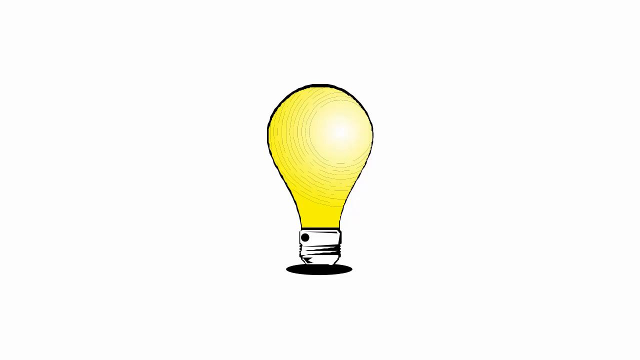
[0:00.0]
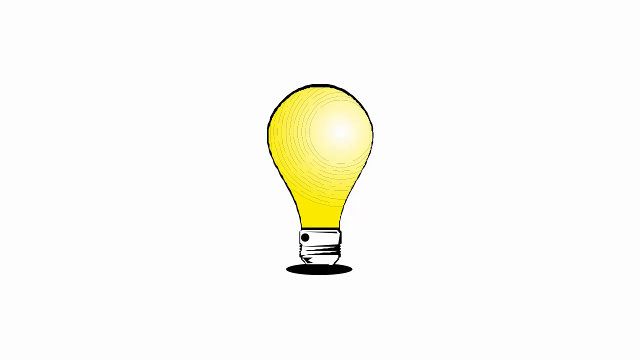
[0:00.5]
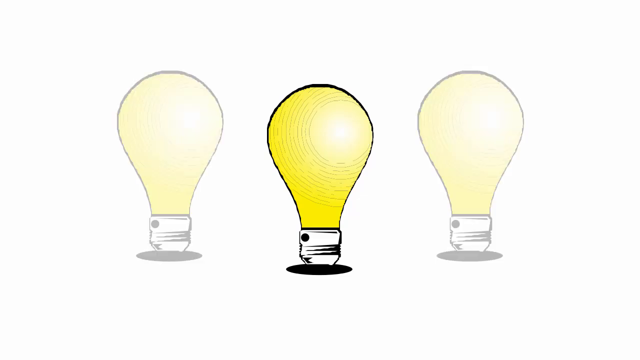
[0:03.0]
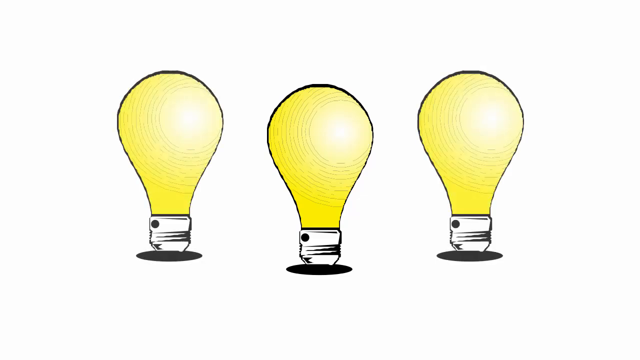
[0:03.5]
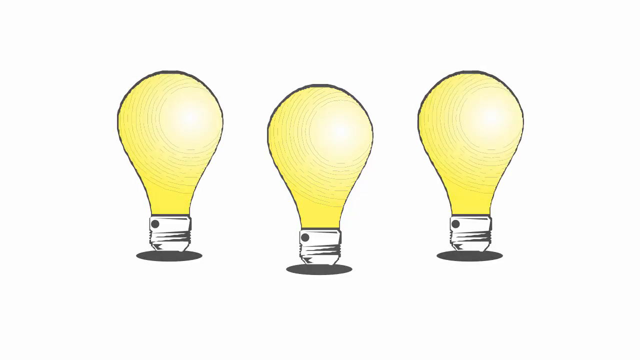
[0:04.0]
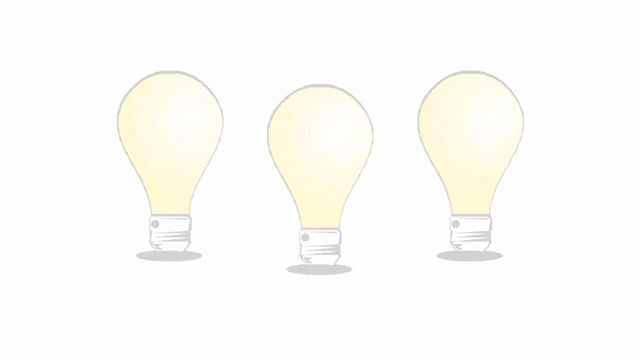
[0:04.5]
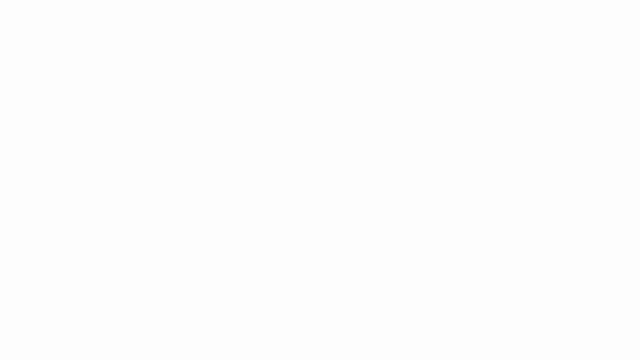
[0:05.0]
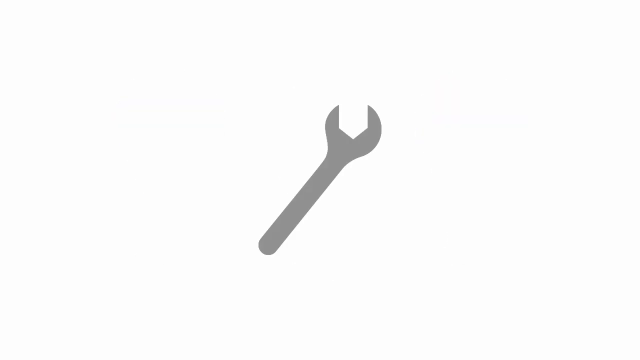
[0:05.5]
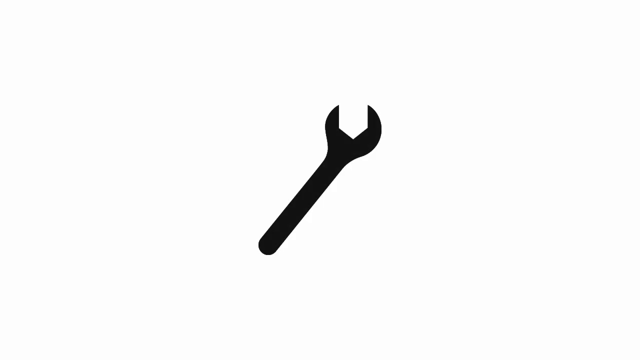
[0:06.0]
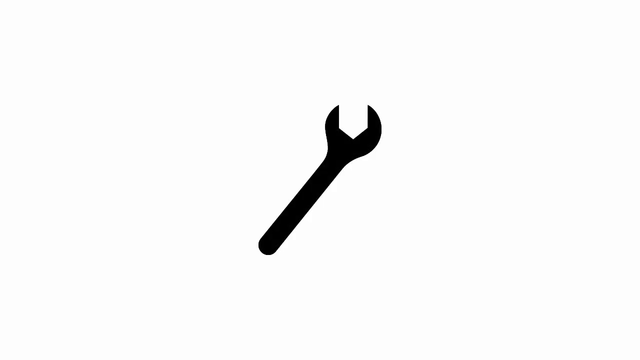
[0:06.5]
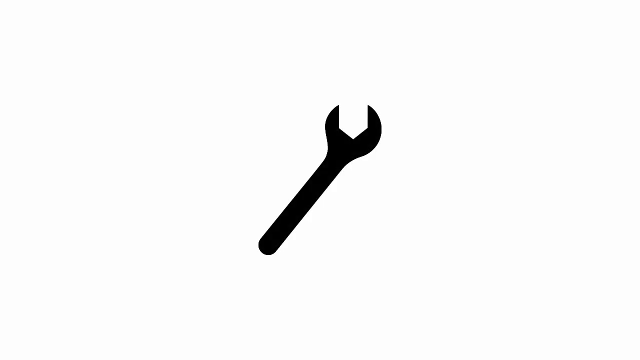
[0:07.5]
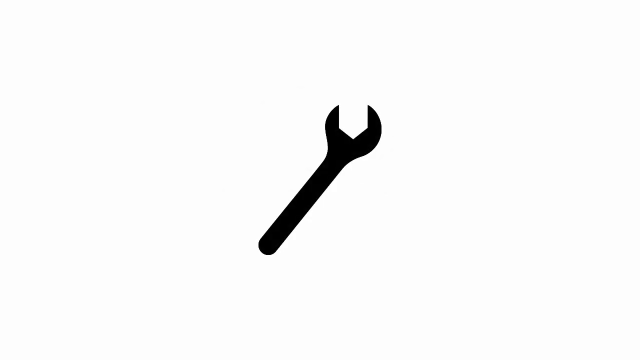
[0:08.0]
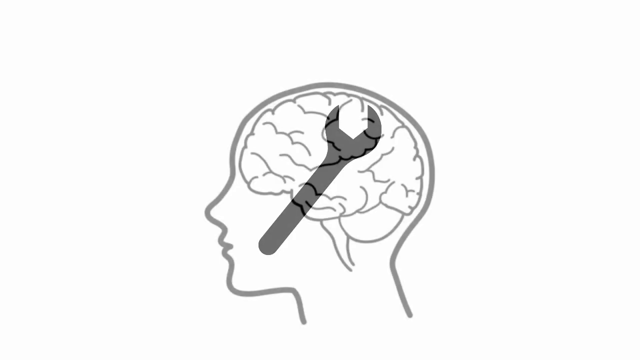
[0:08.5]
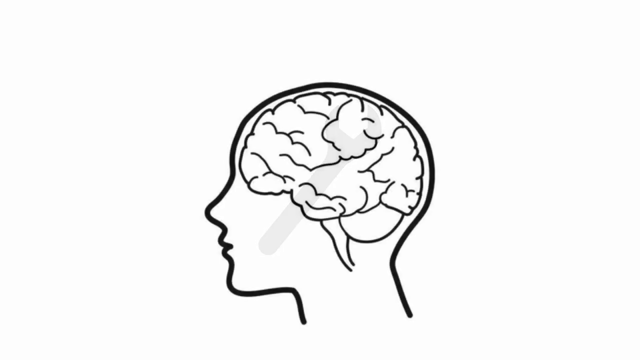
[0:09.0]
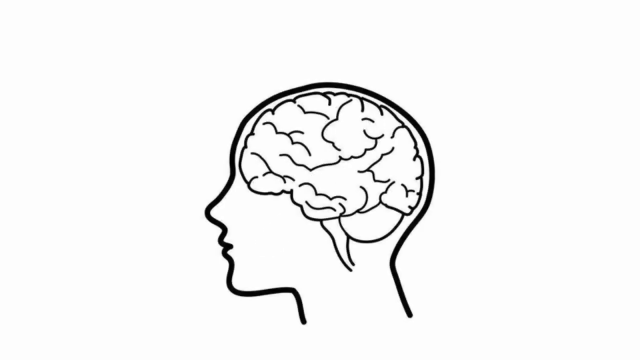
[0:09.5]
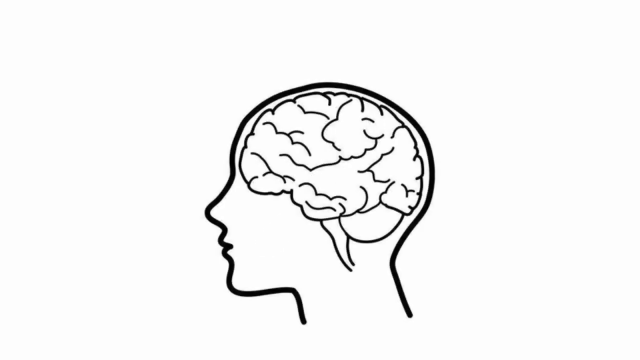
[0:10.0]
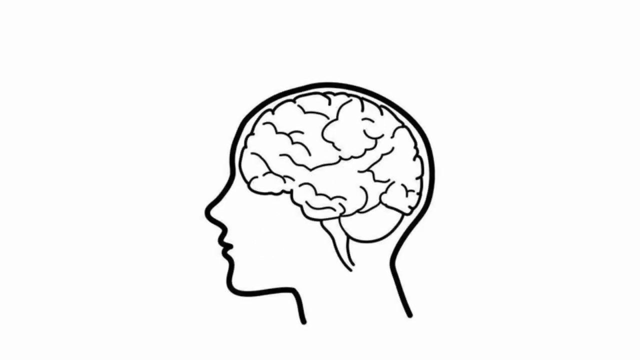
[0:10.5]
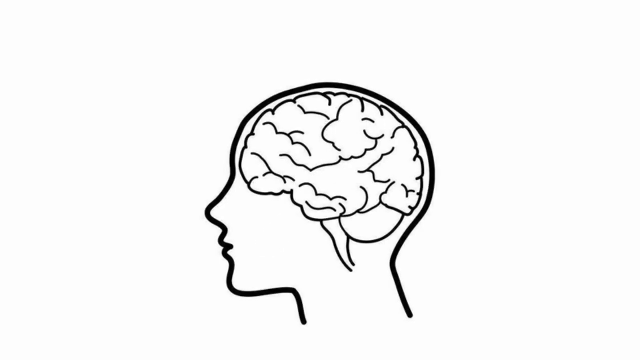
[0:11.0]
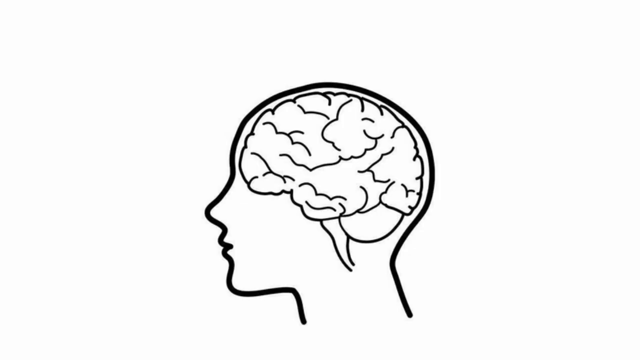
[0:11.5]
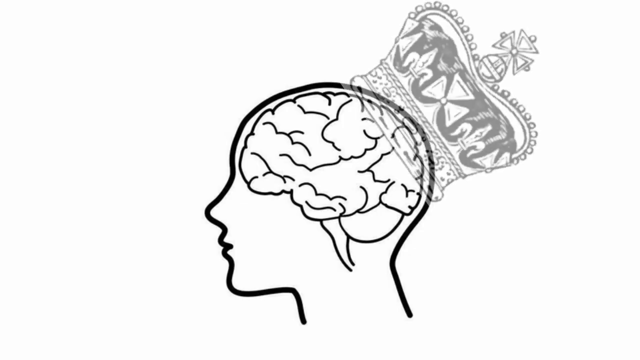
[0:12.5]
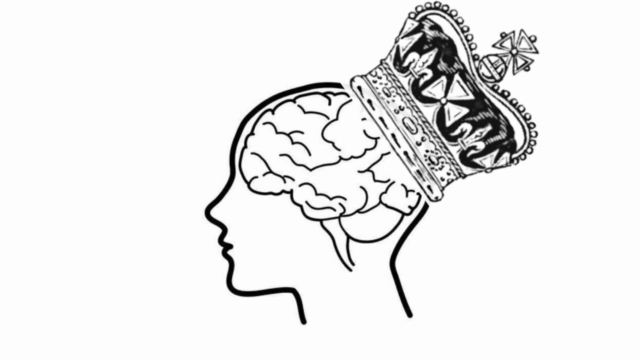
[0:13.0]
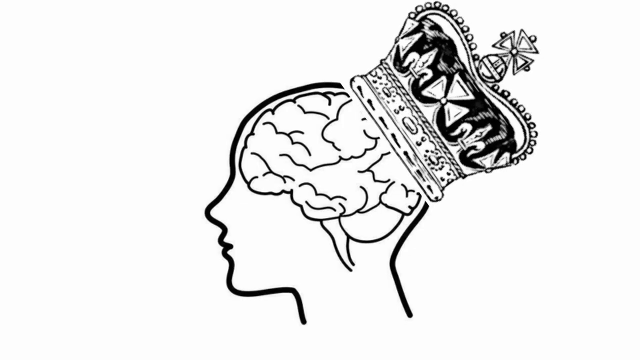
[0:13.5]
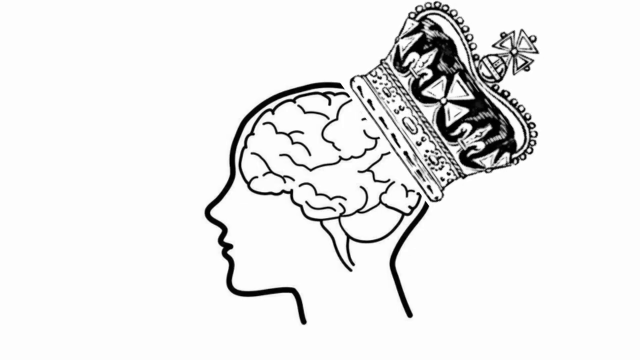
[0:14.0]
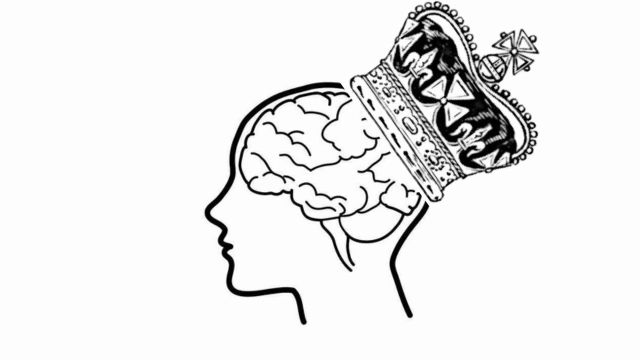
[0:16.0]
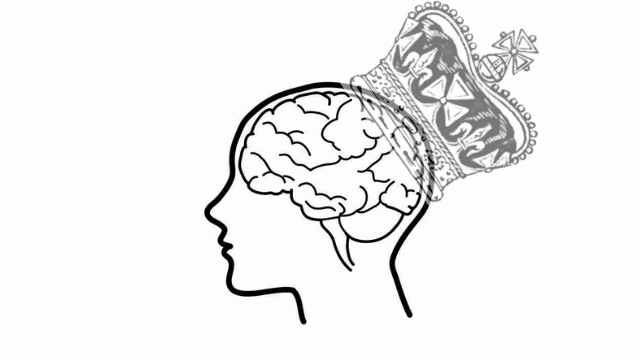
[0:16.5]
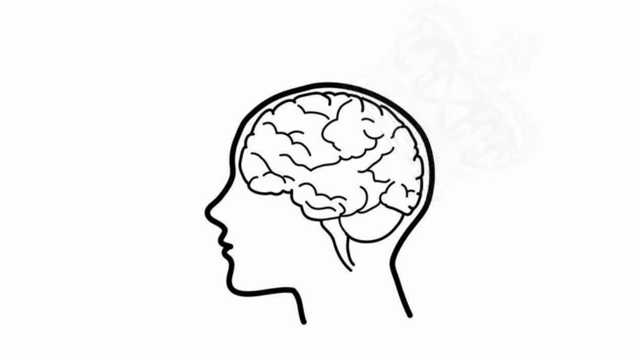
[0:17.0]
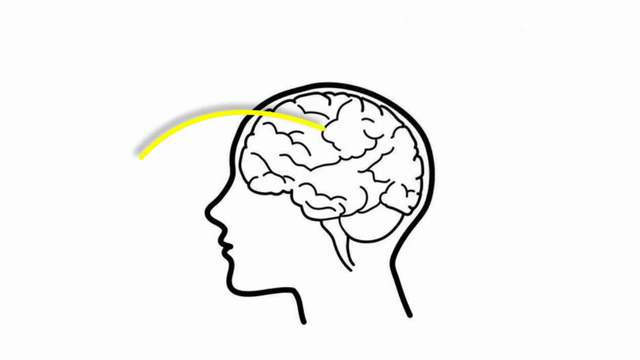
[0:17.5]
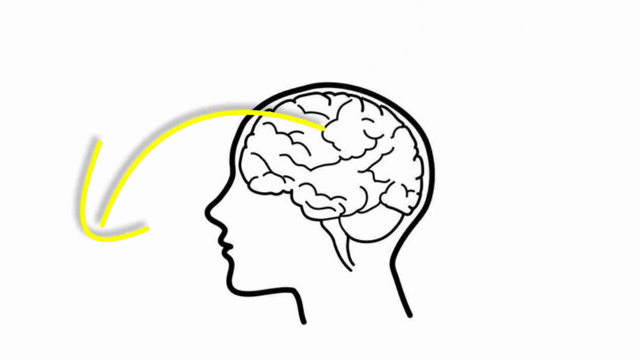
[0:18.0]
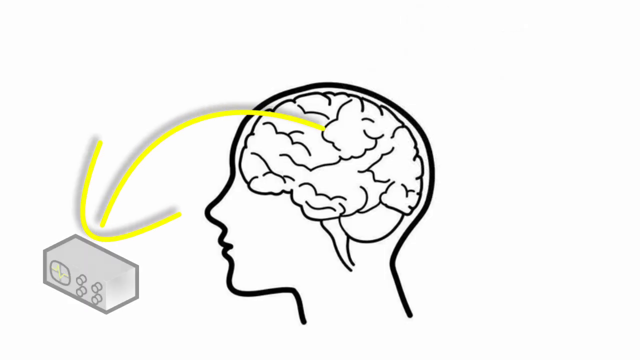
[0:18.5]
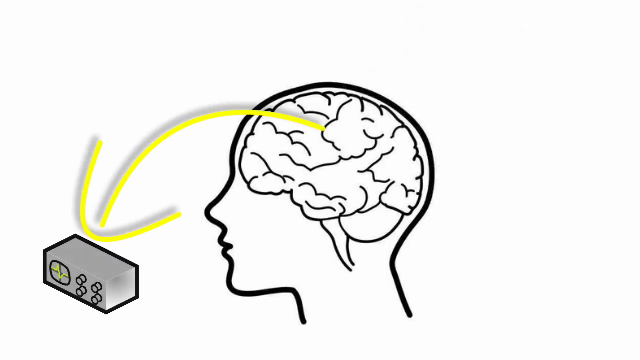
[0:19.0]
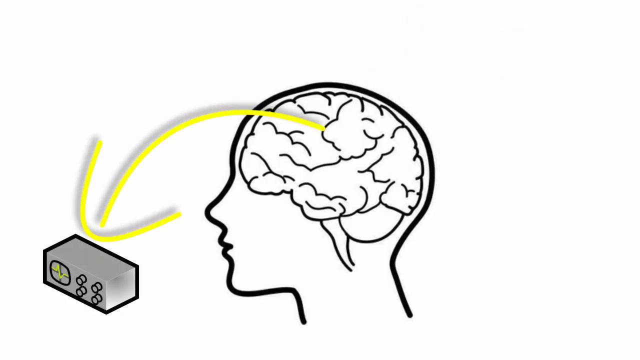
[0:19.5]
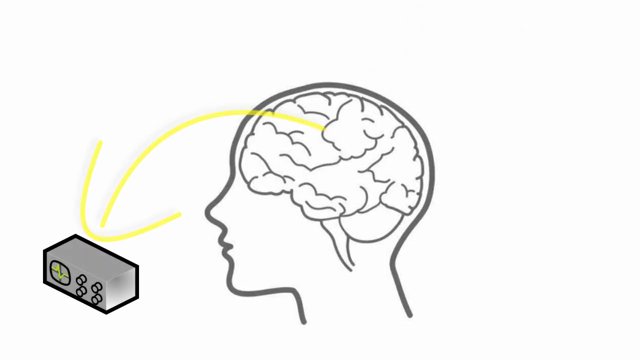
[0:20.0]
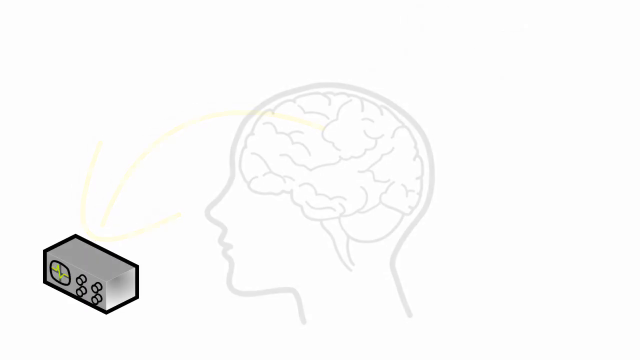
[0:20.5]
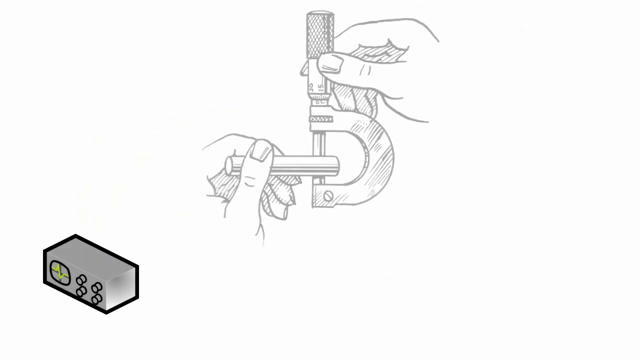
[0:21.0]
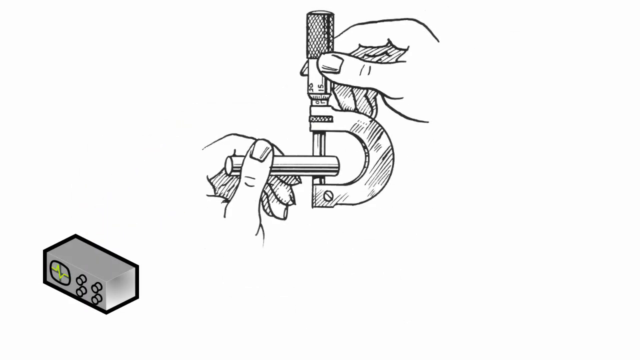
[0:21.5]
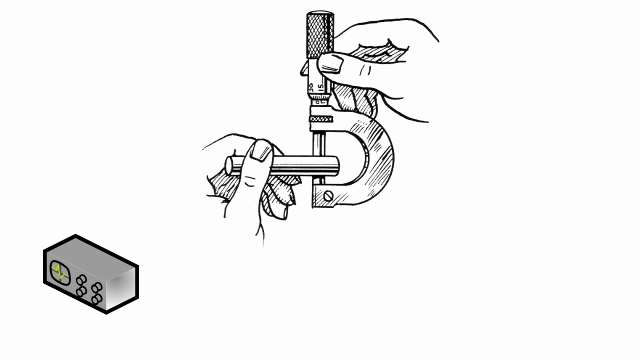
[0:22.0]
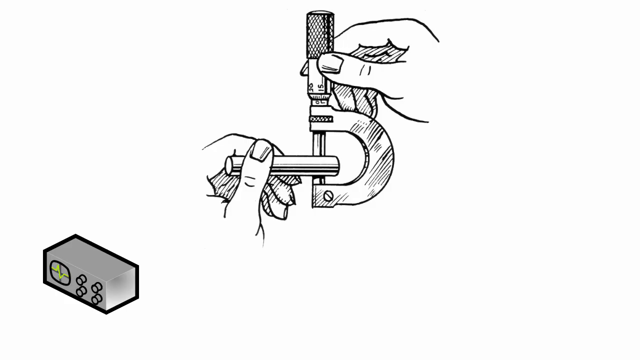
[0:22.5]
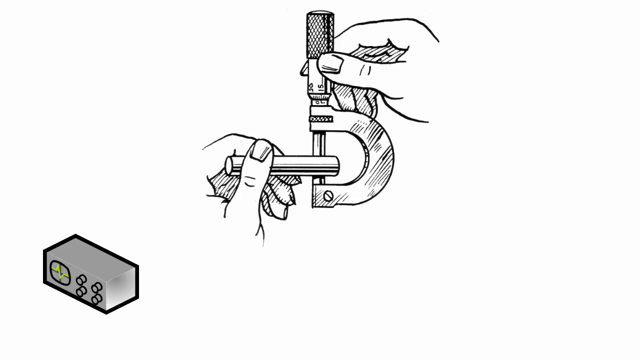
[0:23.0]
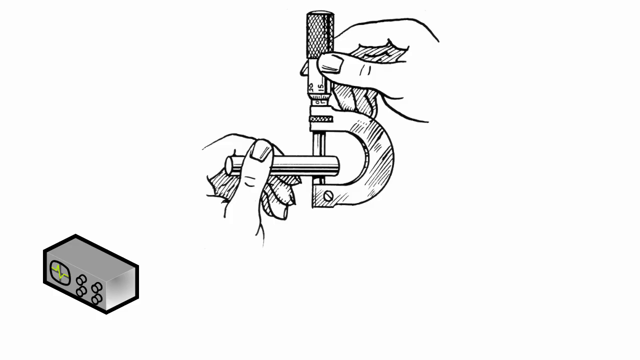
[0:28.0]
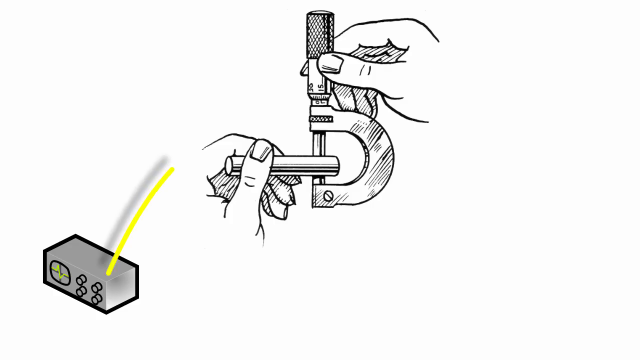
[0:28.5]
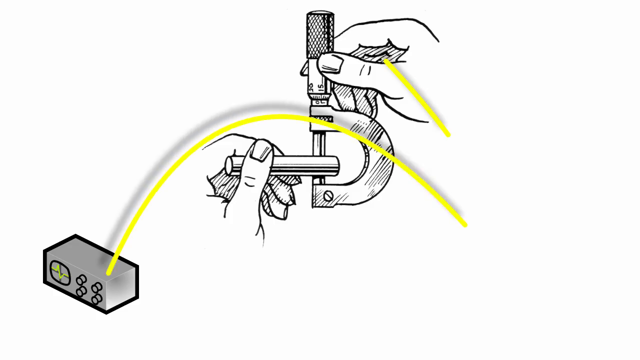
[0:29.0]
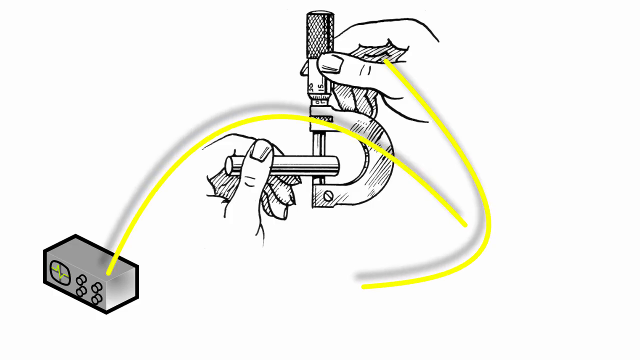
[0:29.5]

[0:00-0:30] A light ball with a bright yellow light in it is shown.